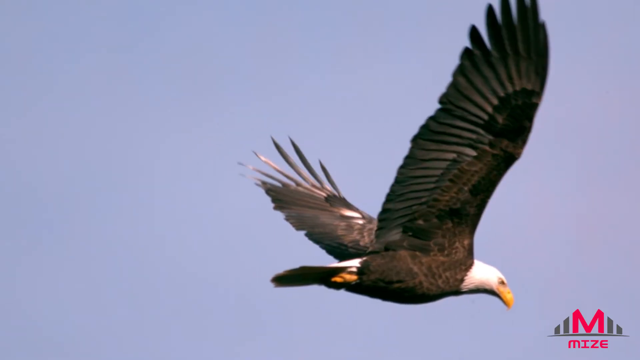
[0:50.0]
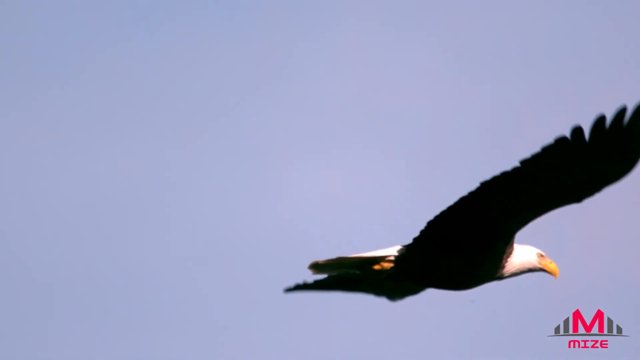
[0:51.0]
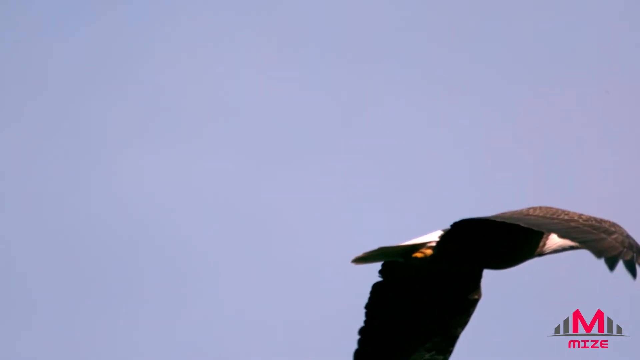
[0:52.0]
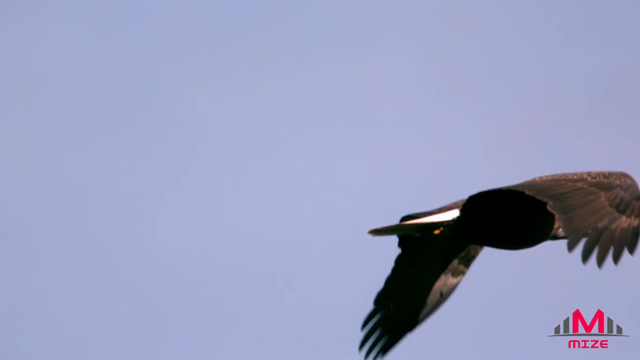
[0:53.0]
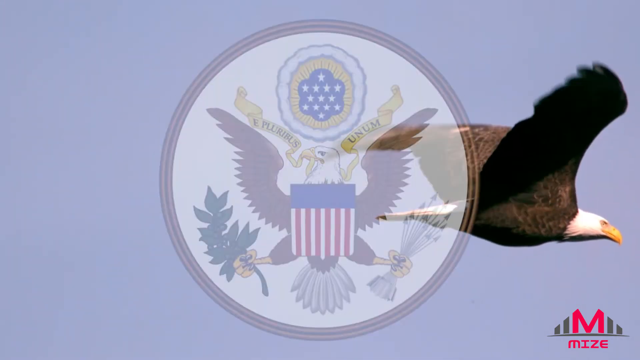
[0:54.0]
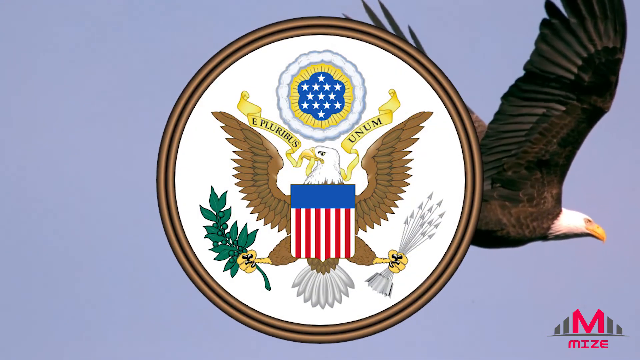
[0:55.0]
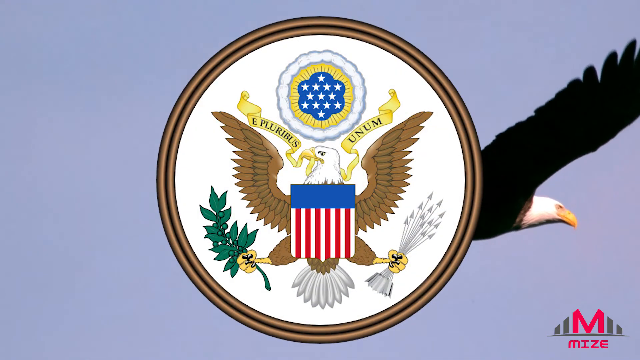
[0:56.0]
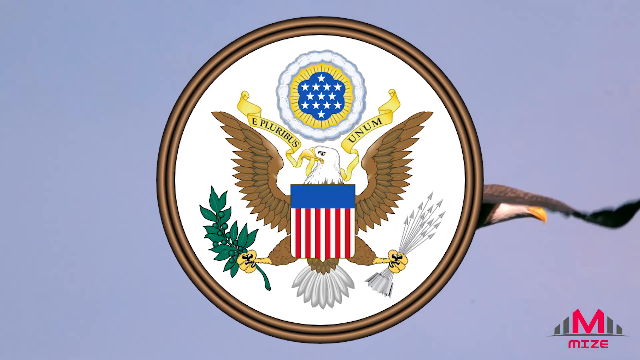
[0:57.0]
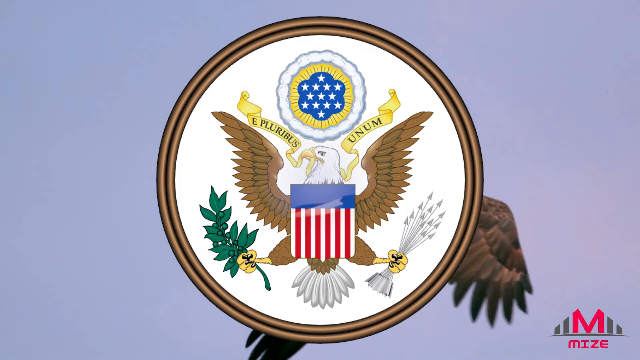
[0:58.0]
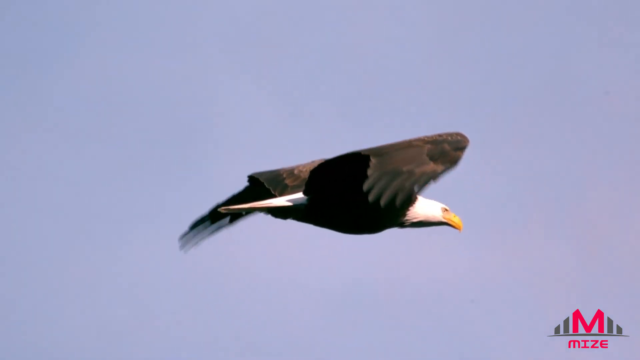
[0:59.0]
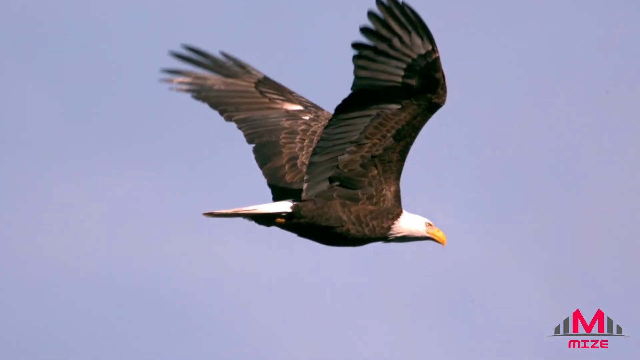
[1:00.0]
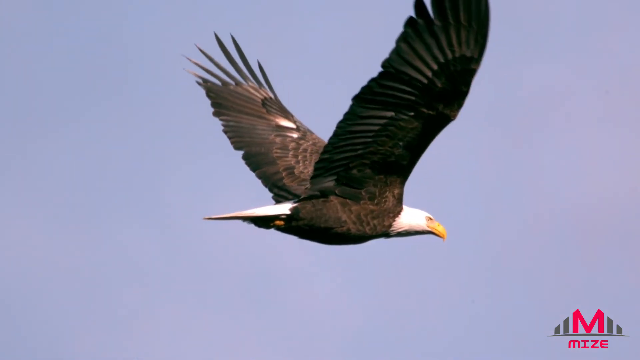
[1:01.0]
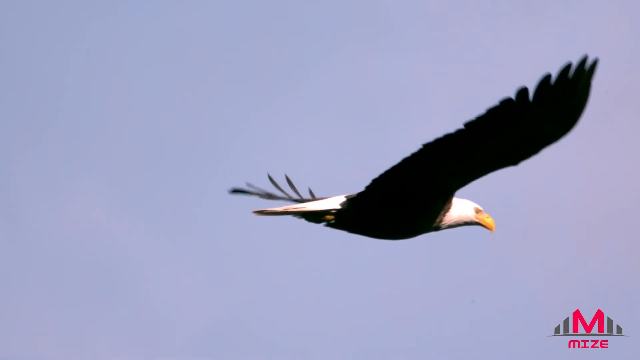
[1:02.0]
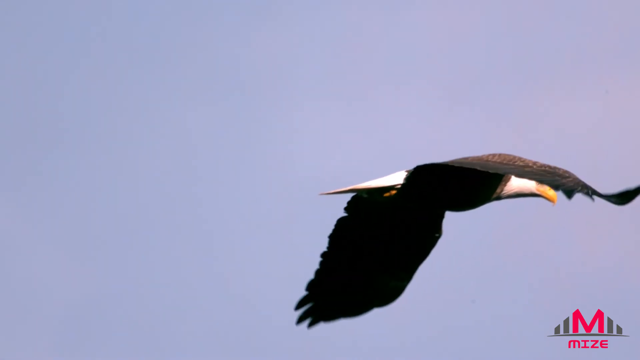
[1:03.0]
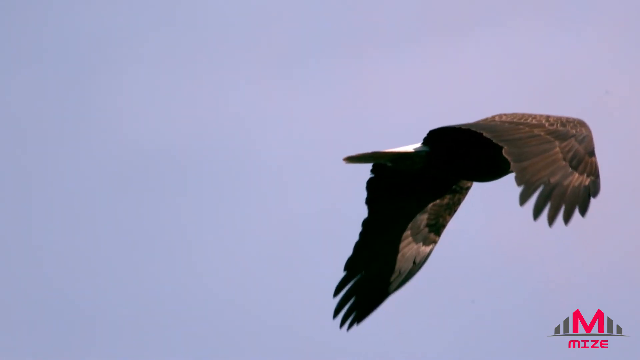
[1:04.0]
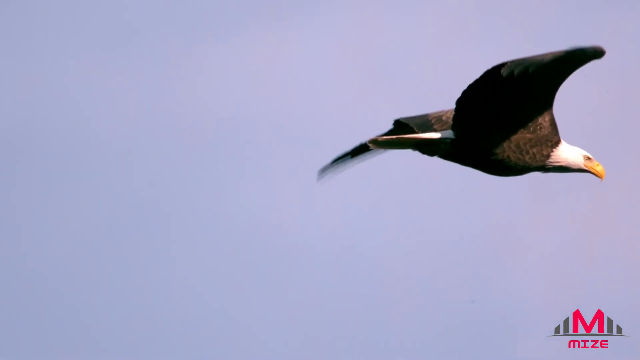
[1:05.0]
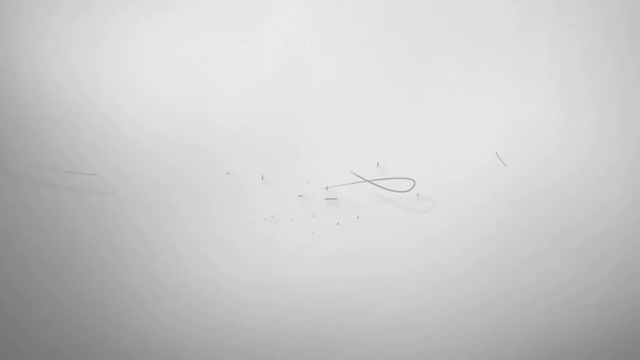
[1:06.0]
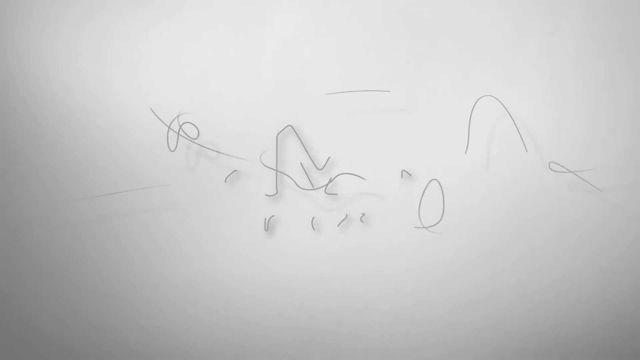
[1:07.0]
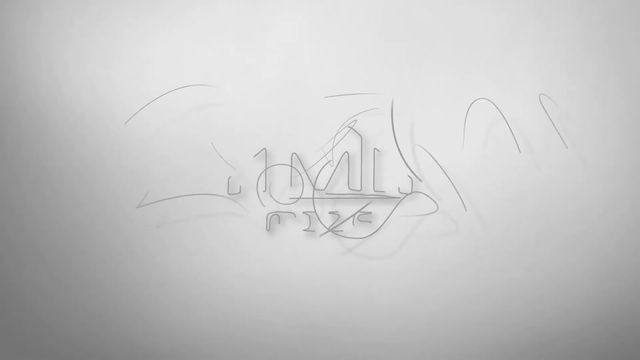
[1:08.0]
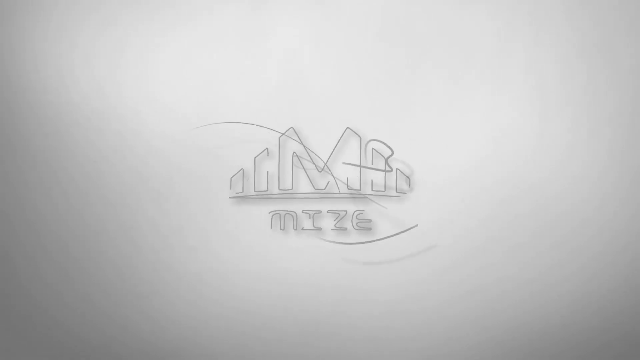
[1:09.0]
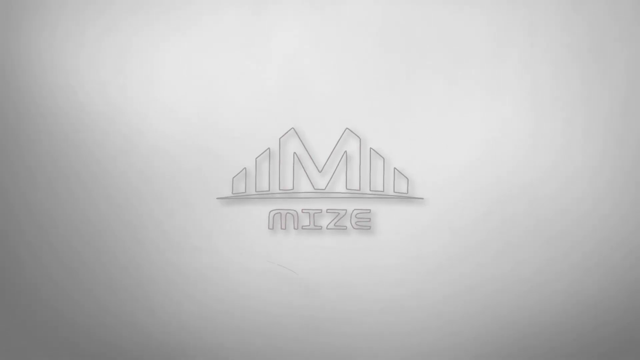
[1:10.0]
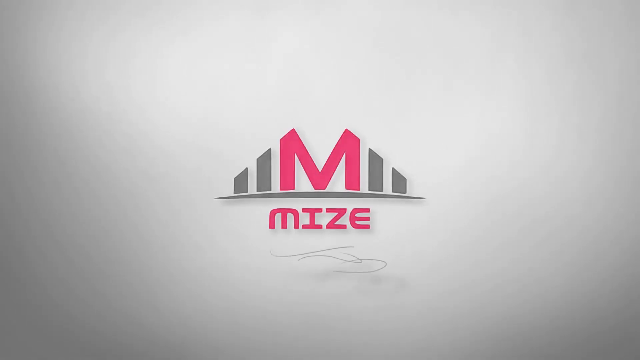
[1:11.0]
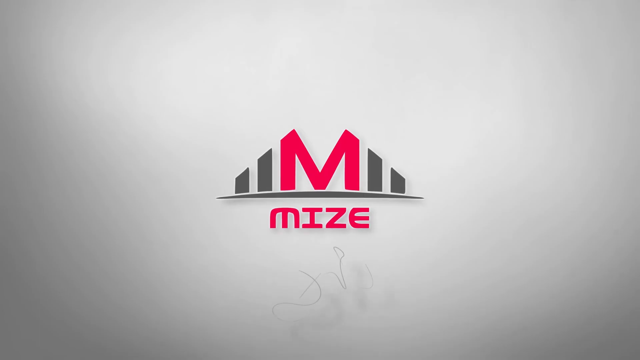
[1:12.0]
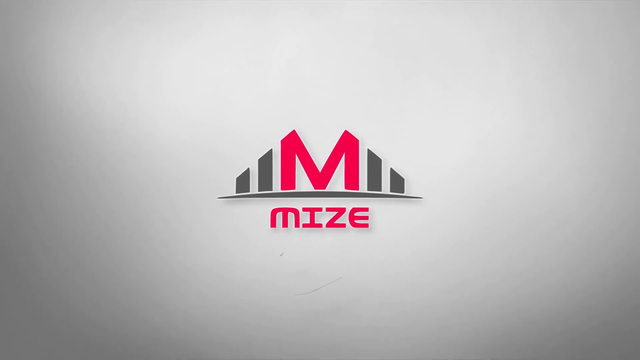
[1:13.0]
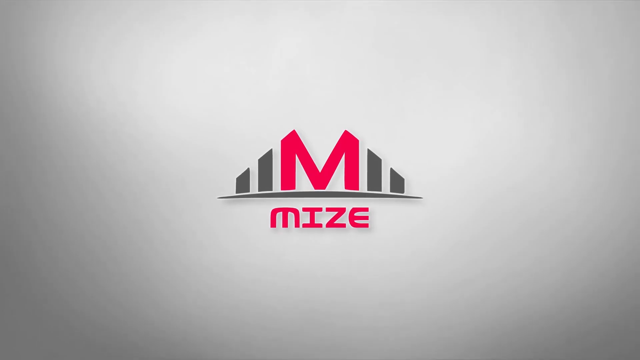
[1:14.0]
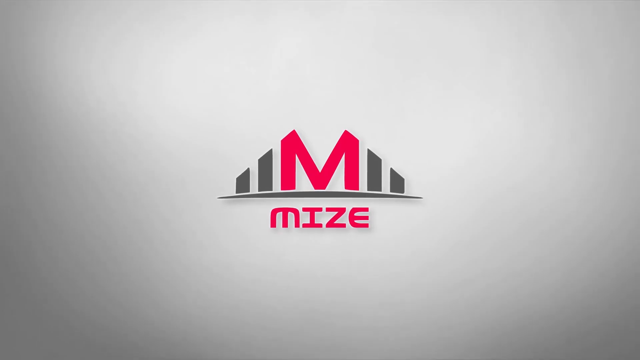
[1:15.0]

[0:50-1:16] An eagle is flying, and then the logo of the United States of America appears.